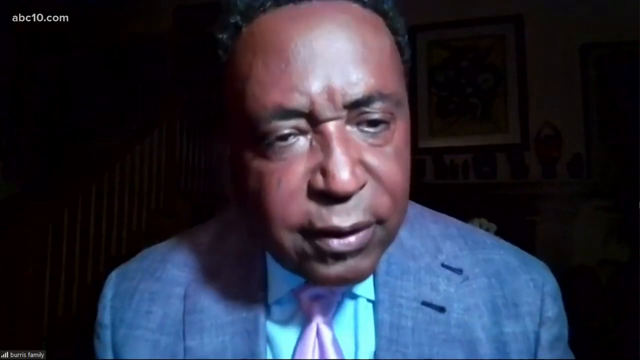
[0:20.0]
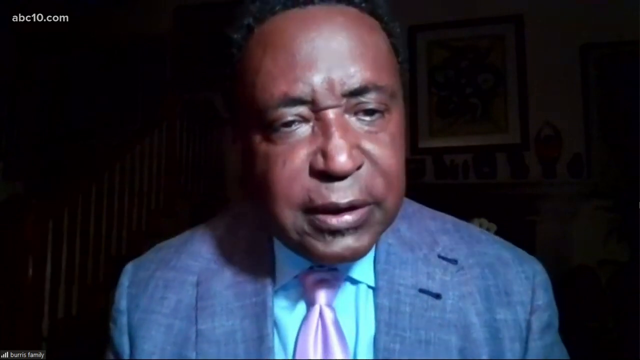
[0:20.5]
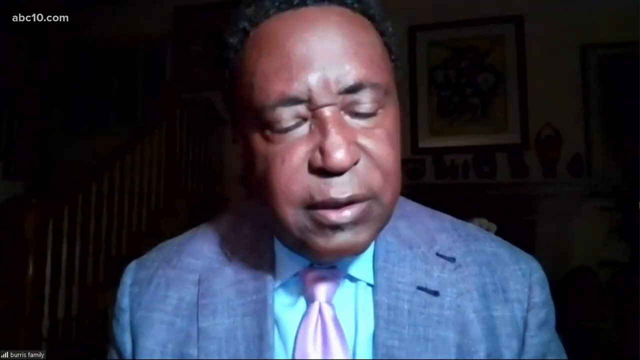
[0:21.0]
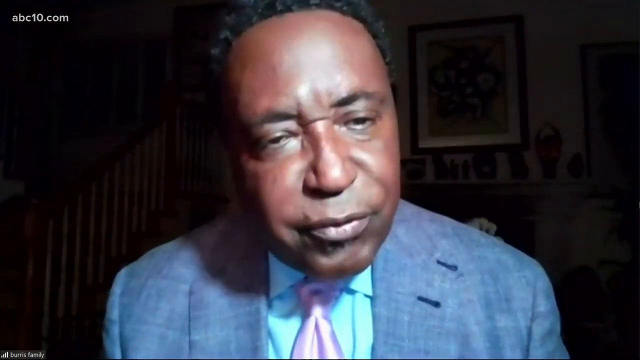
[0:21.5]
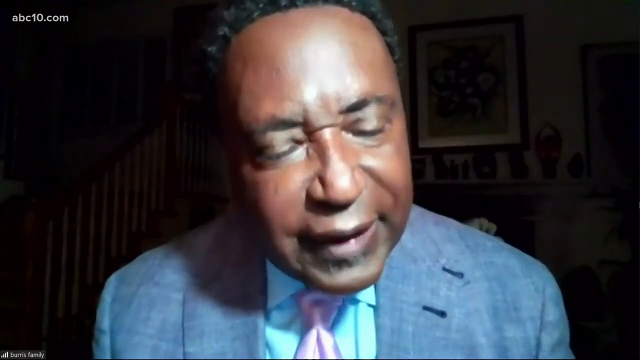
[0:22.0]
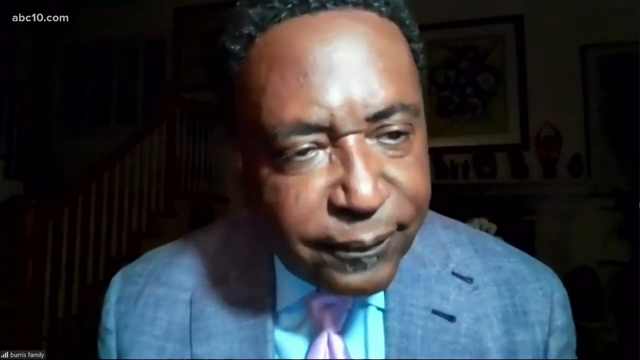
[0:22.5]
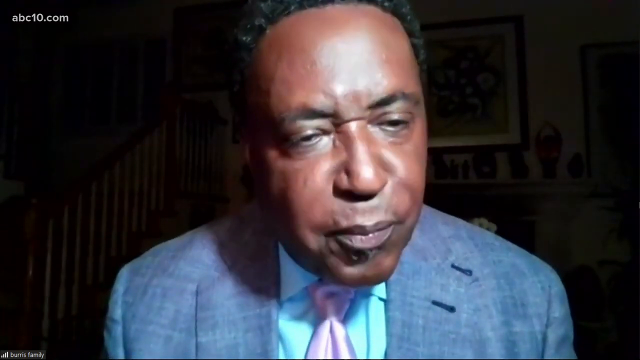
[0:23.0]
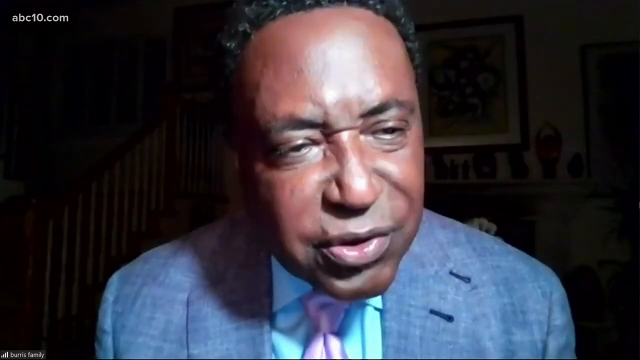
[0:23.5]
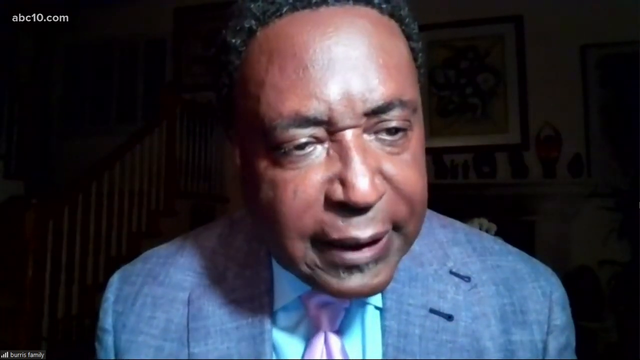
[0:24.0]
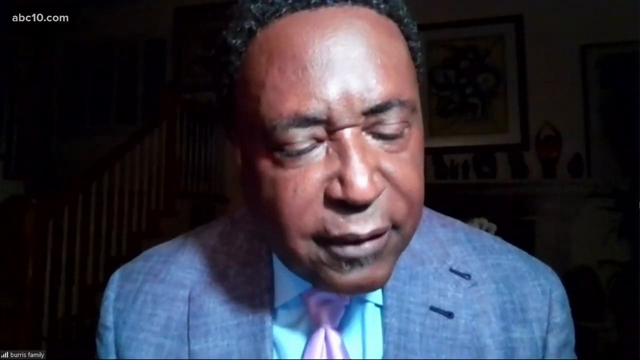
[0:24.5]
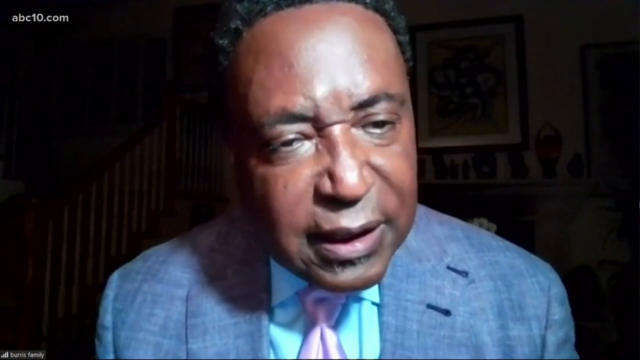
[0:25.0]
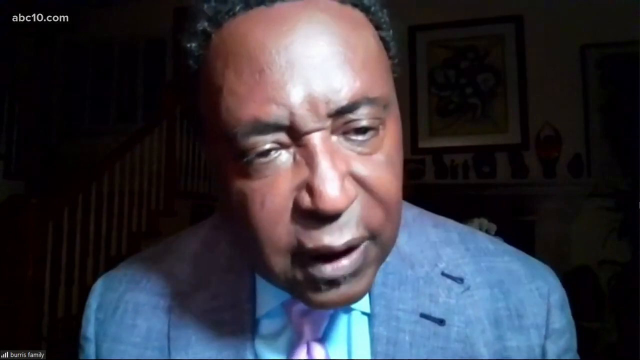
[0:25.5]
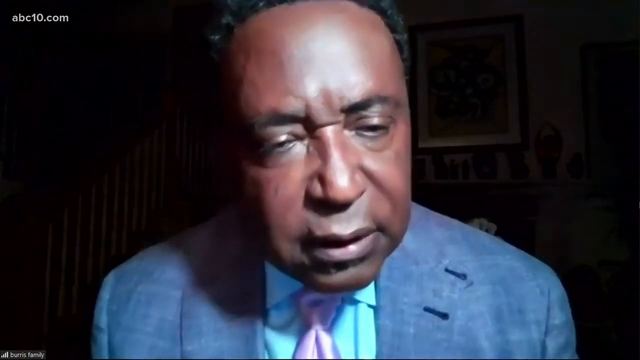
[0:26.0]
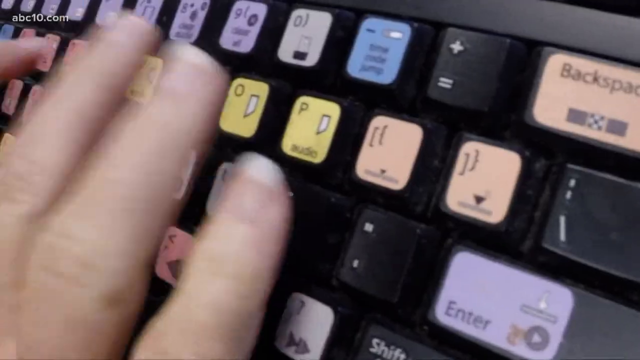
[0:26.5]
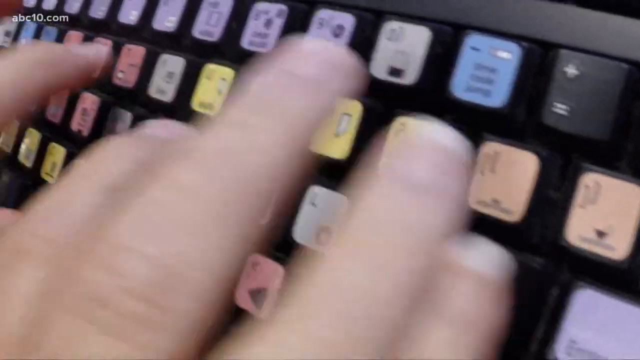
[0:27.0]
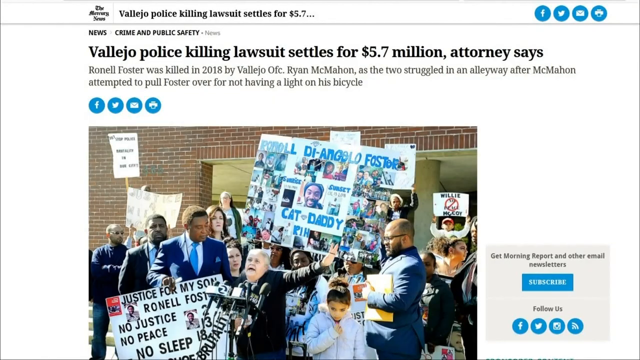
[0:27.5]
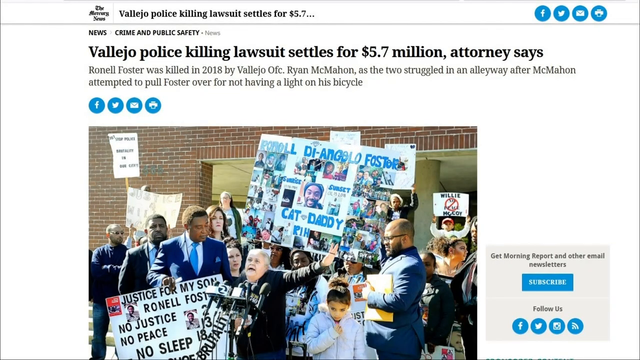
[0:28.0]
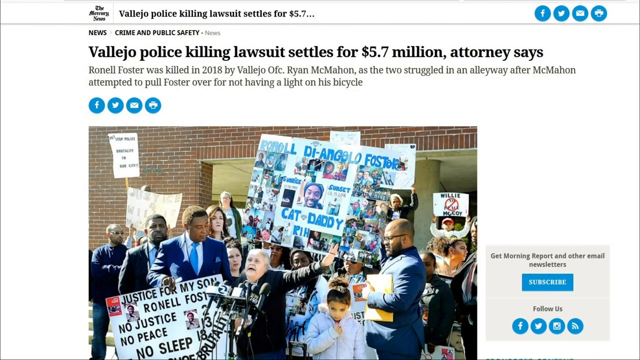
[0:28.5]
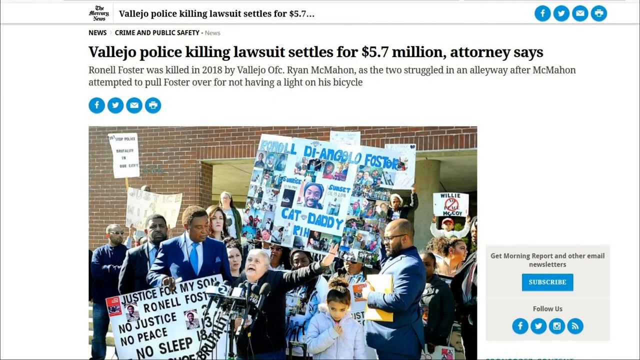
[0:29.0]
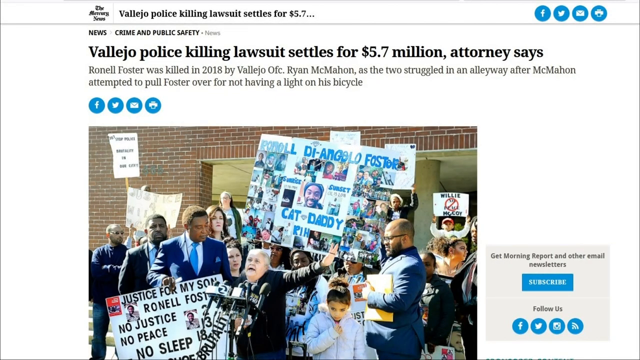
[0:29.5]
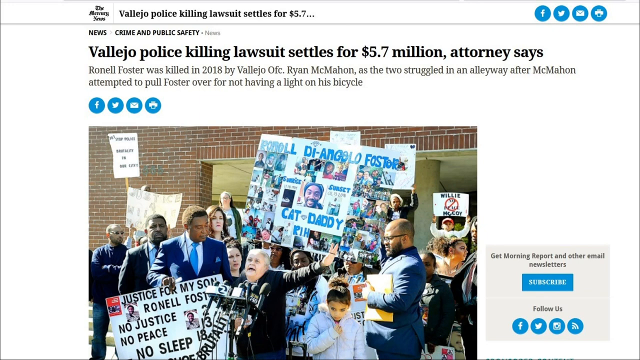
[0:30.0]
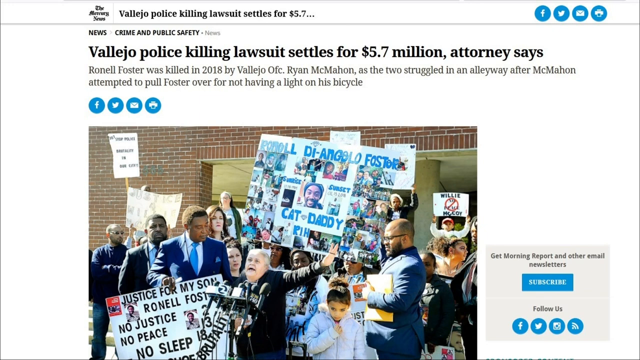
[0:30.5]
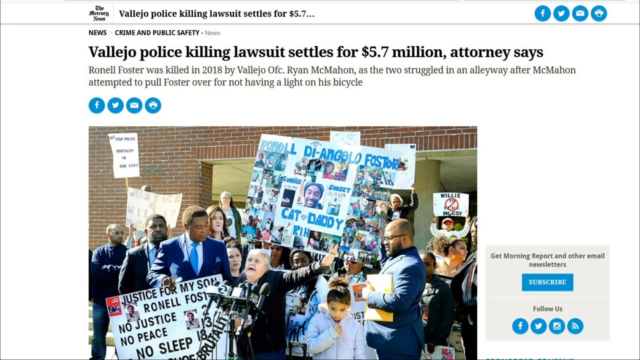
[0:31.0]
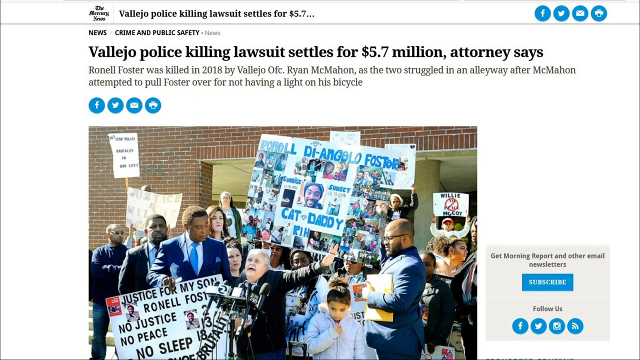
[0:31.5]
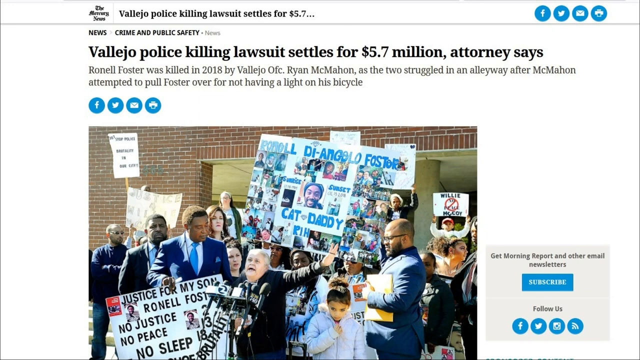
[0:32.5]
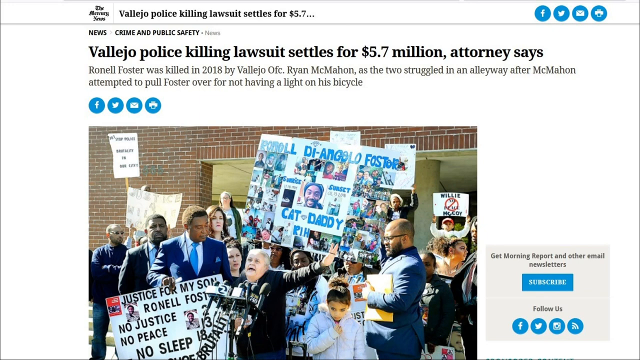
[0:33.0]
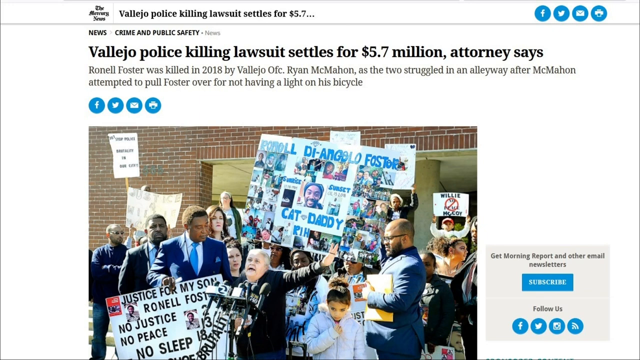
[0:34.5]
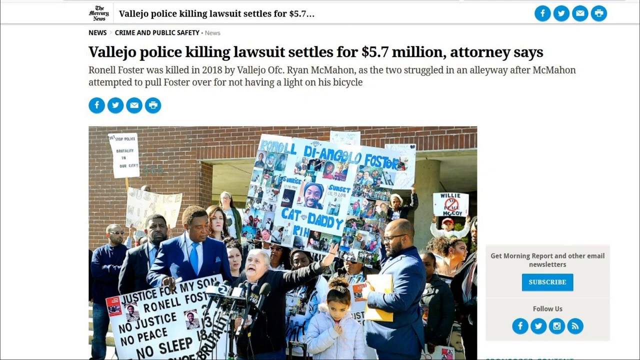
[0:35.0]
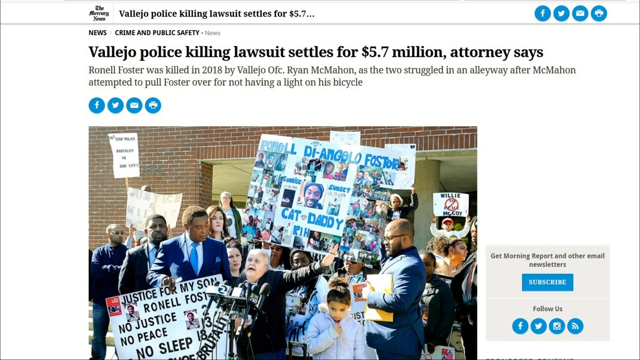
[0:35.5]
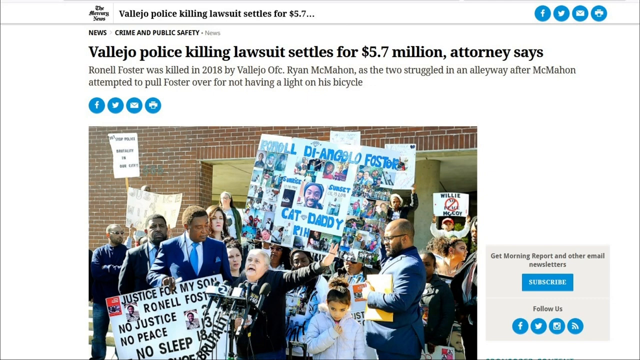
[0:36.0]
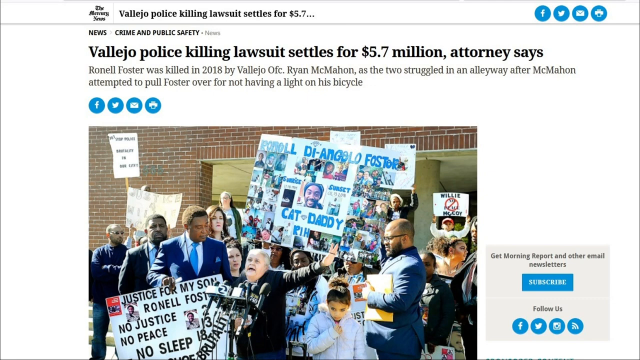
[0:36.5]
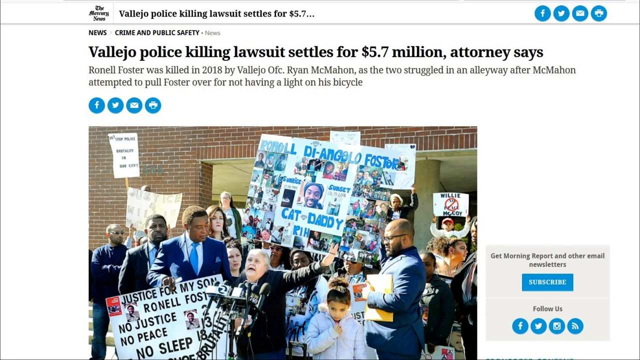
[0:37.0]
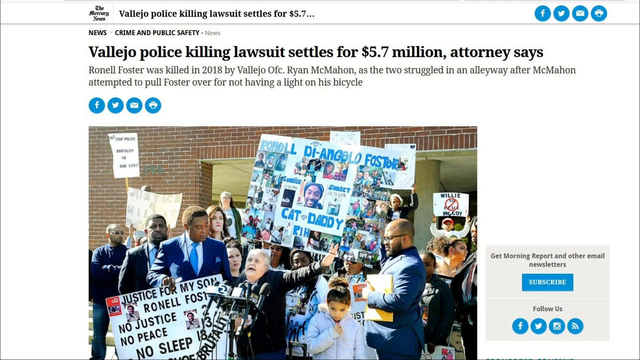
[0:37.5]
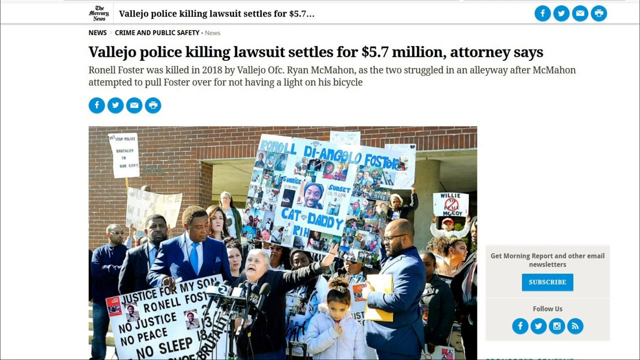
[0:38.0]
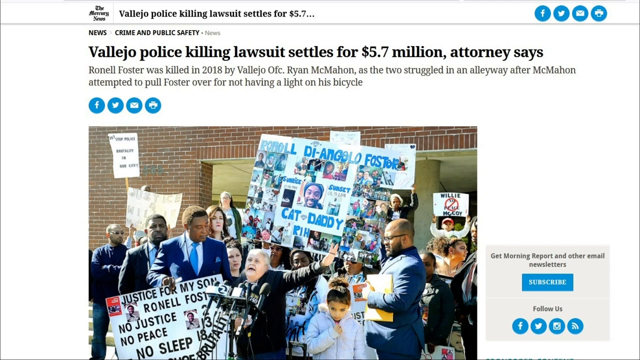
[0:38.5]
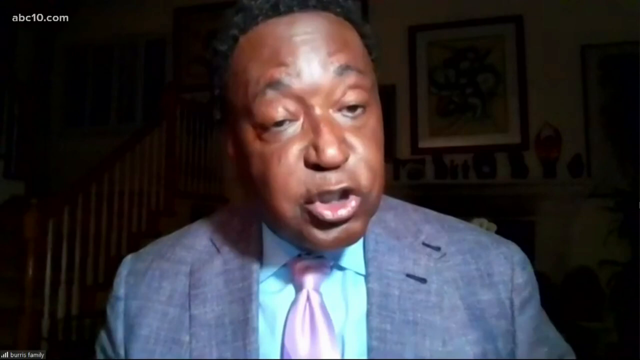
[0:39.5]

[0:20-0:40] What looks like a video chat with another man follows. A man in the center of the screen wears a gray suit and appears to be looking down toward the right side, probably at a screen, as he speaks. He looks quite serious. He moves closer to the camera and then pulls back. The video cuts to transitional footage of two hands typing on a keyboard, then to a screen capture of a news article from a website. The article's title says "Vallejo Police Killing Lawsuit Settles for 5.7 Million, attorney says". Below it is an image of the man from the virtual interview, looking down toward the right side at a woman standing at a podium with her left arm outstretched as if she is yelling. Behind them a bunch of people hold signs asking for justice for a man named Ronald Foster. The camera kind of lingers on the screen capture for a while.